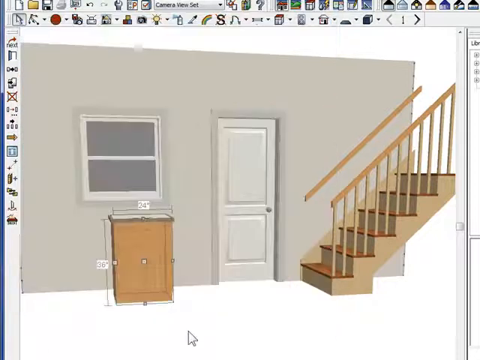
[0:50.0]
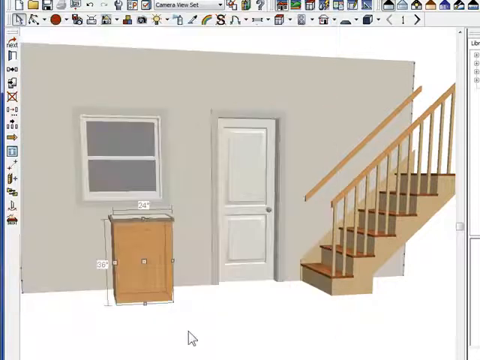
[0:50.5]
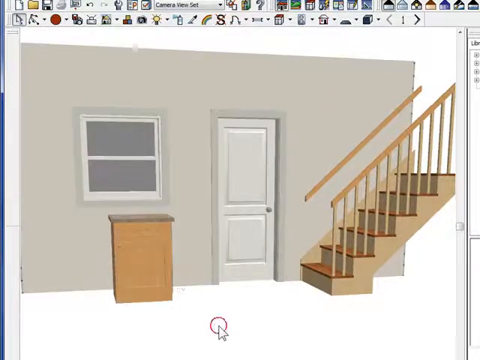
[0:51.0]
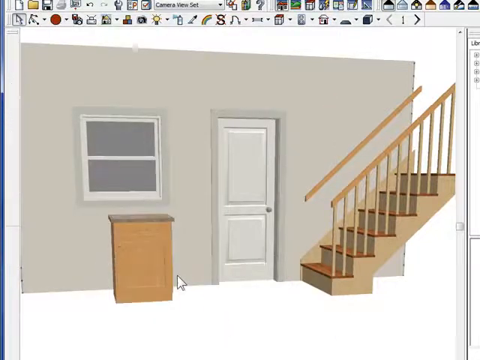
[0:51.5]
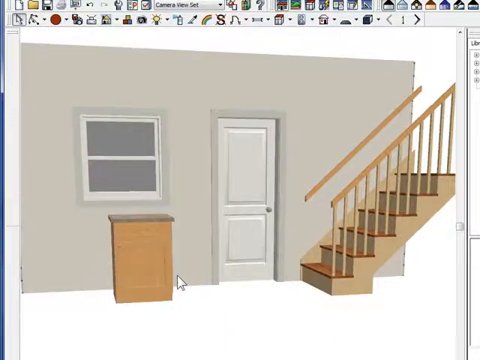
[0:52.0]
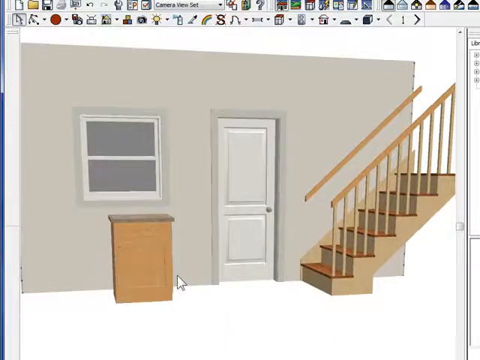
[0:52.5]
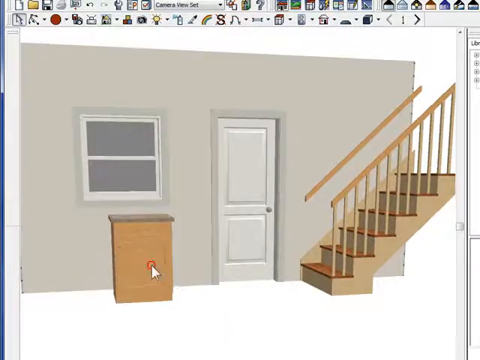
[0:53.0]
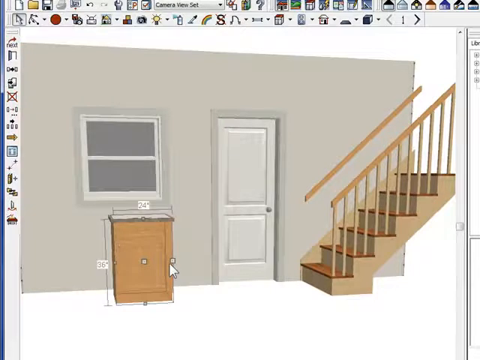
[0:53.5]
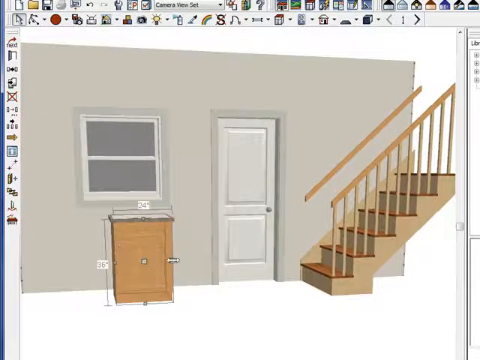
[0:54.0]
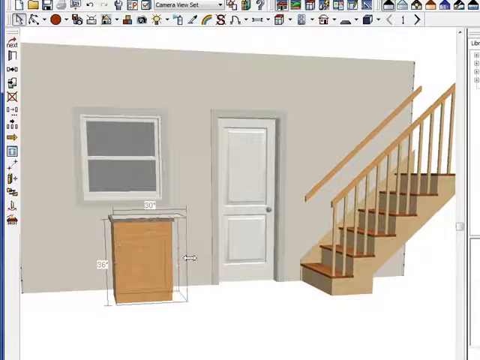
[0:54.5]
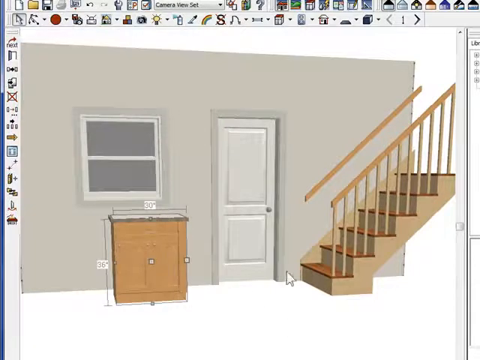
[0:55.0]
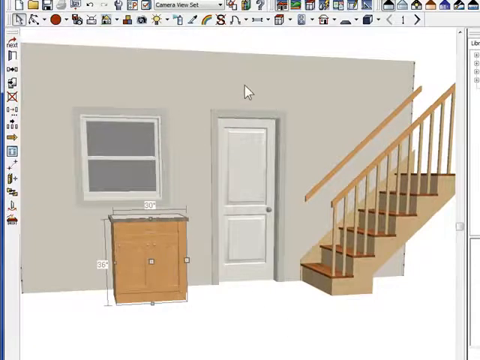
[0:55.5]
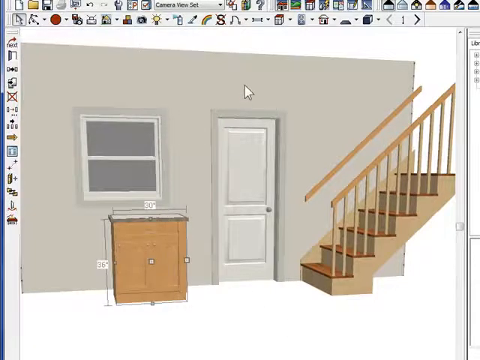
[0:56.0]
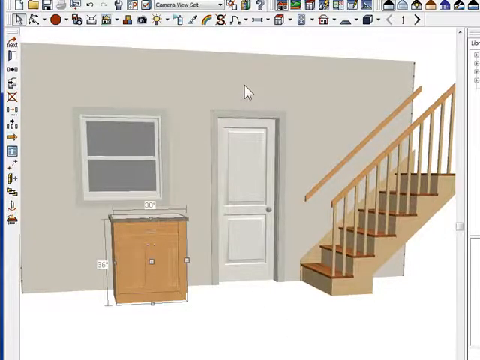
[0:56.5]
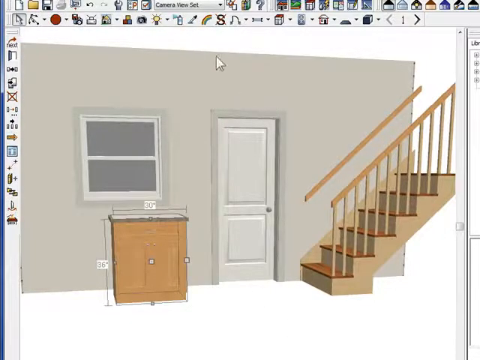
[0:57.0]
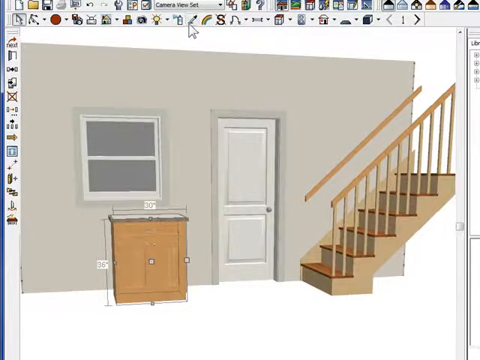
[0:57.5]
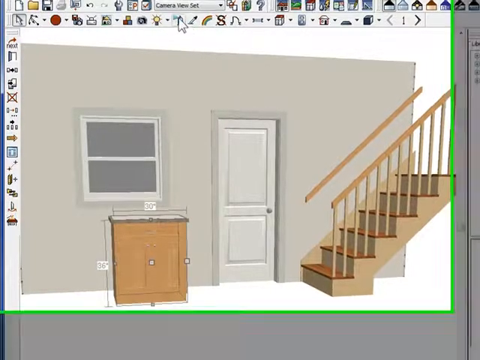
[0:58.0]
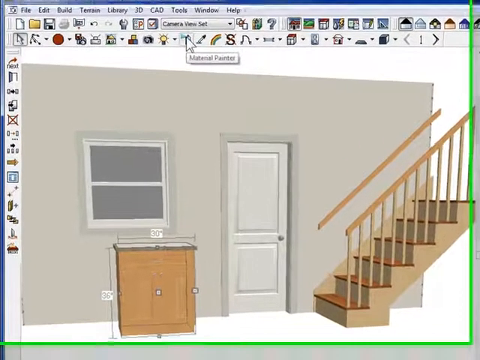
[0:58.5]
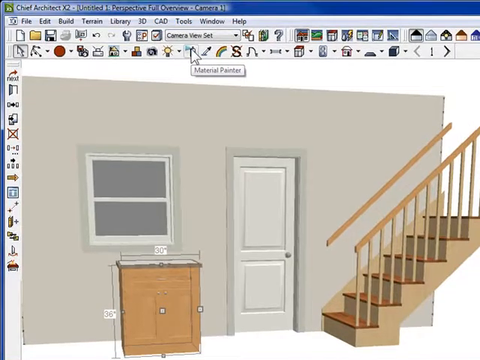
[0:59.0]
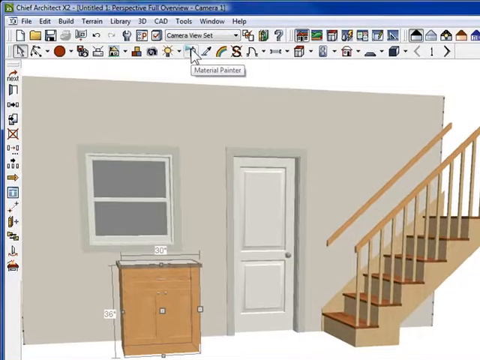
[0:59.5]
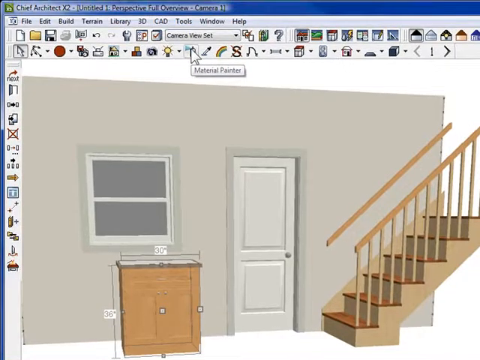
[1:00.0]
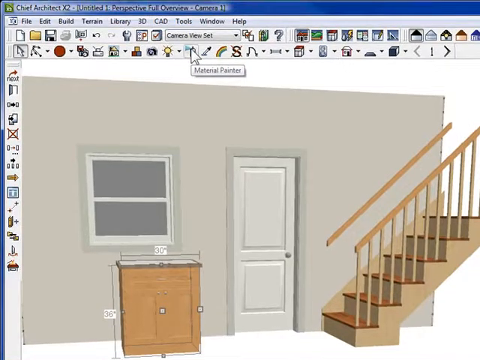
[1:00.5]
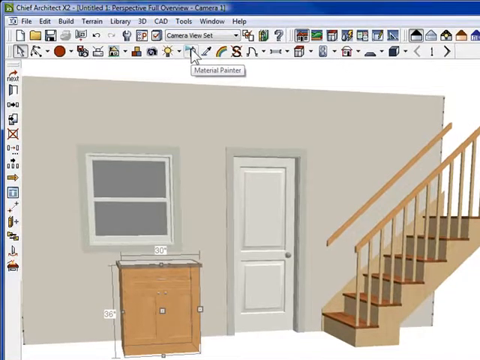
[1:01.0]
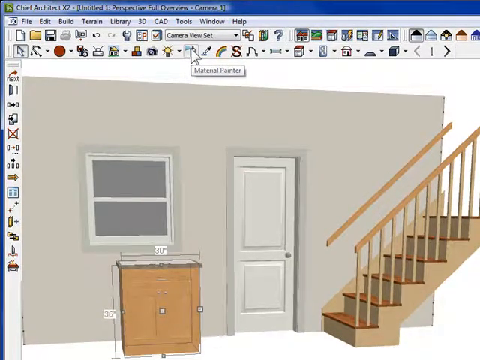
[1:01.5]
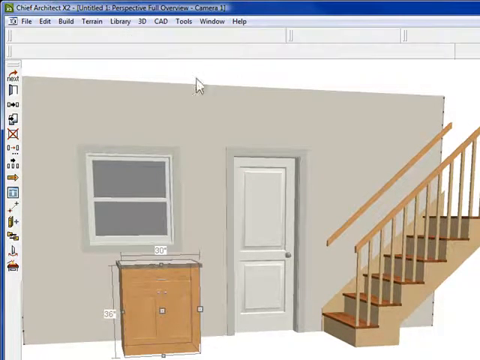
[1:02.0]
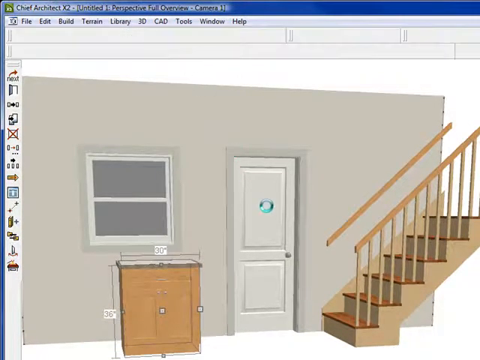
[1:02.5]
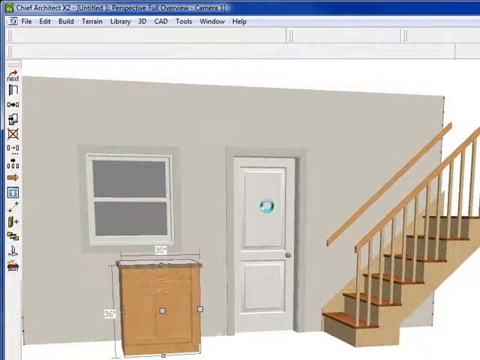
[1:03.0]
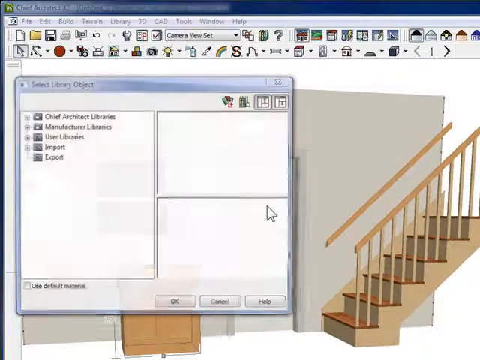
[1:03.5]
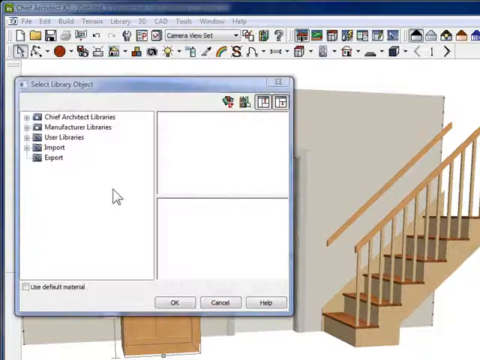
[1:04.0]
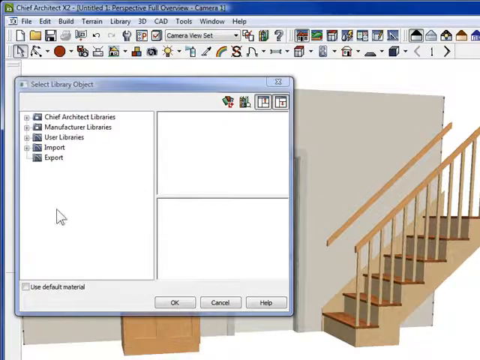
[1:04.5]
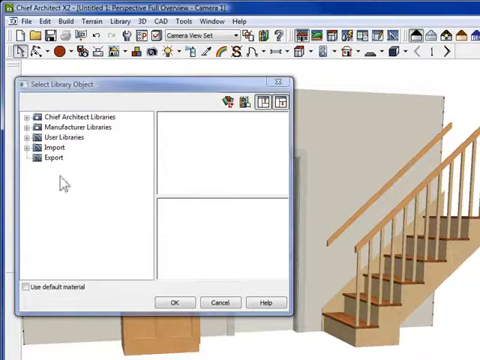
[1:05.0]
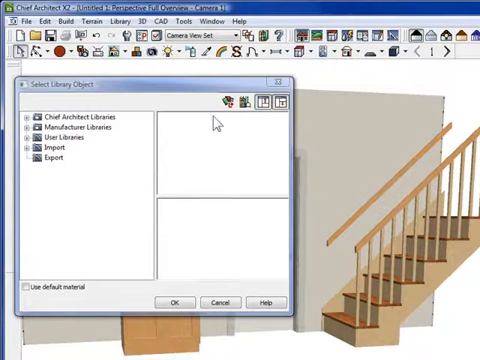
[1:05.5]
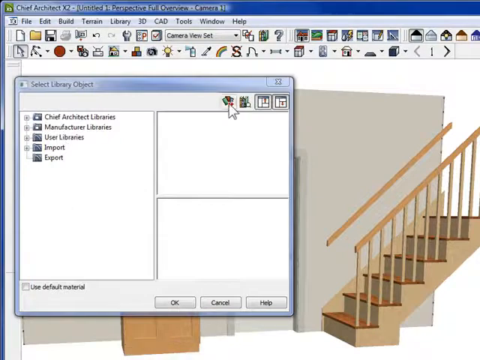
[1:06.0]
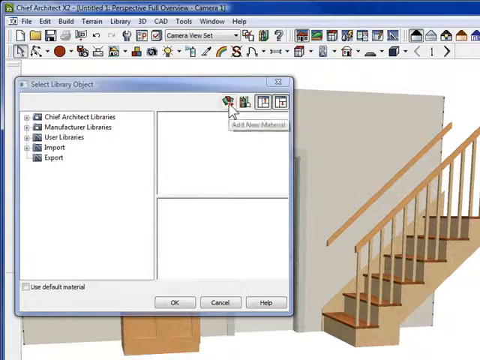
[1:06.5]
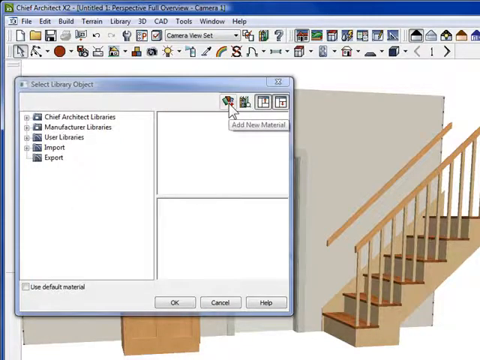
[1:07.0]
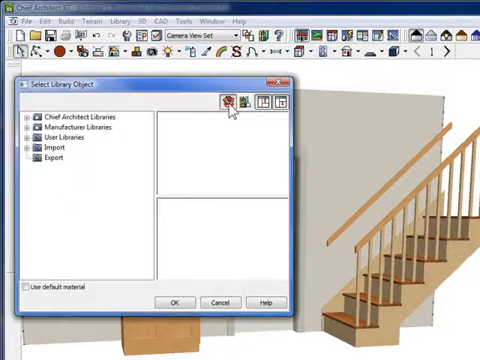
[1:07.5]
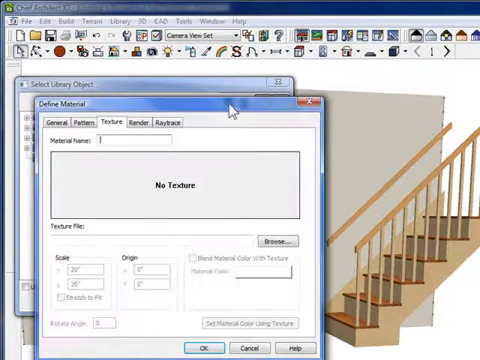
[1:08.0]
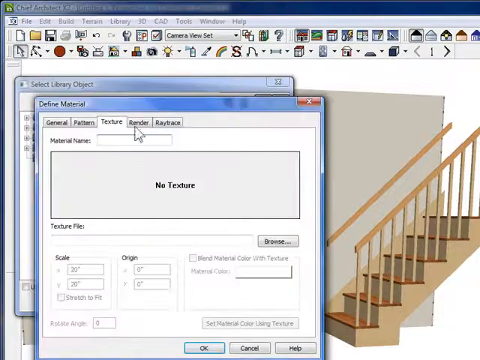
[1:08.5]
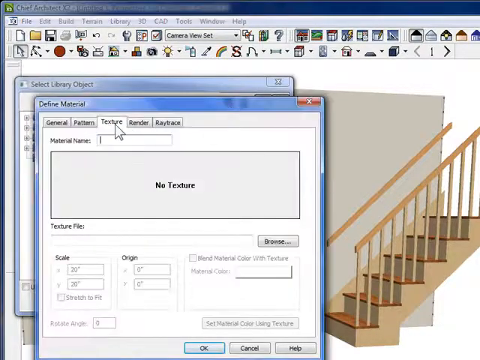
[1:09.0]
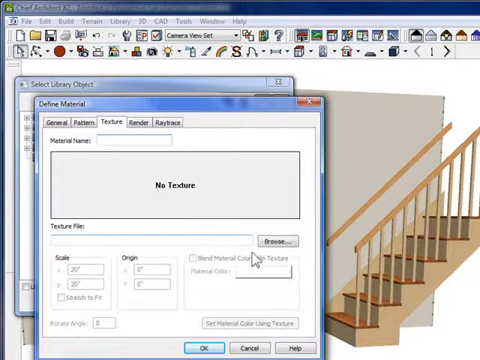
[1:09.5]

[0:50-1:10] Clicking on certain parts of the architectural rendering brings up measurements. The cursor goes up to the icons at the top, which appear to offer different features, and a pop-up menu appears showing various tabs and options. The nightstand or table is clicked, seemingly to make it bigger. A white text box comes up with five or six options on the left. A pop-up about the table gives its measurements, including height. The last text box that comes up appears to be about materials and reads "define material, no texture, pattern, general", with many options.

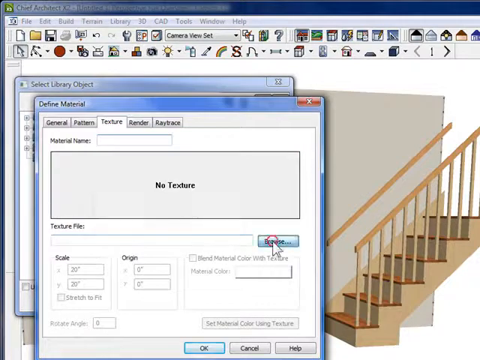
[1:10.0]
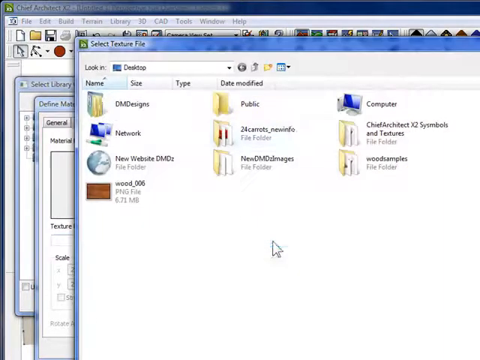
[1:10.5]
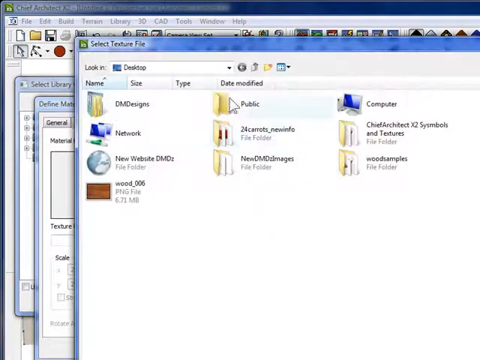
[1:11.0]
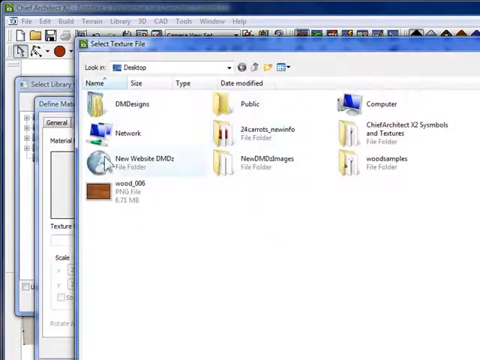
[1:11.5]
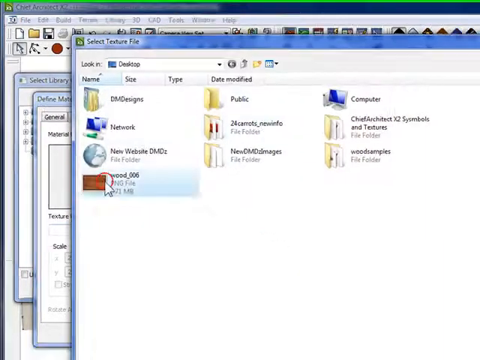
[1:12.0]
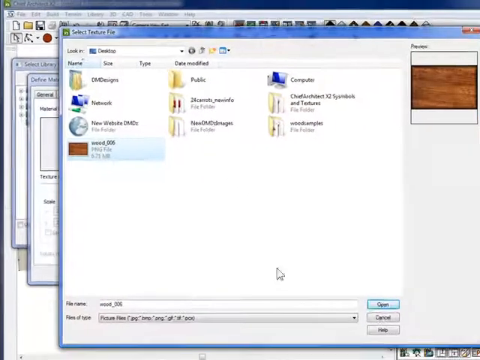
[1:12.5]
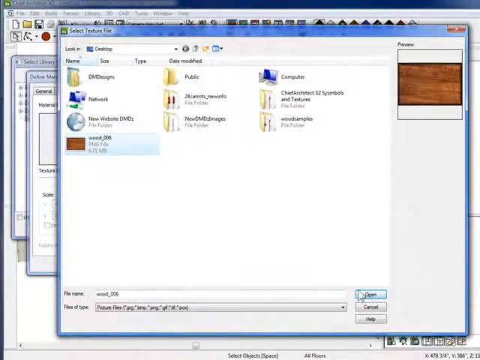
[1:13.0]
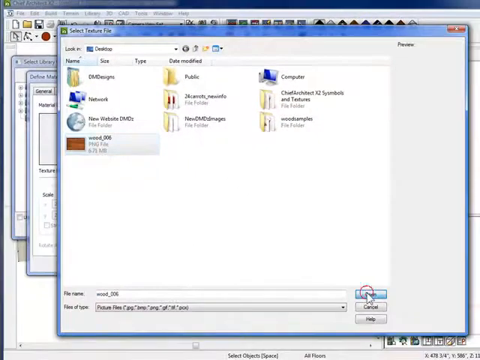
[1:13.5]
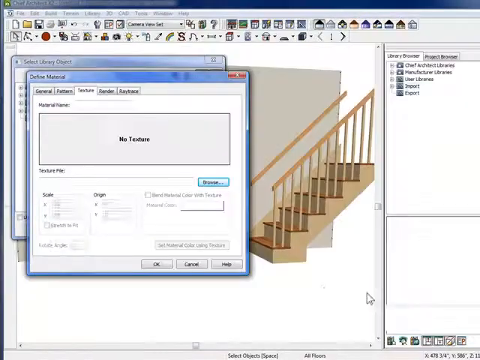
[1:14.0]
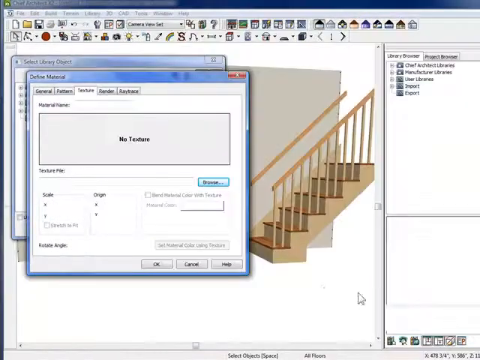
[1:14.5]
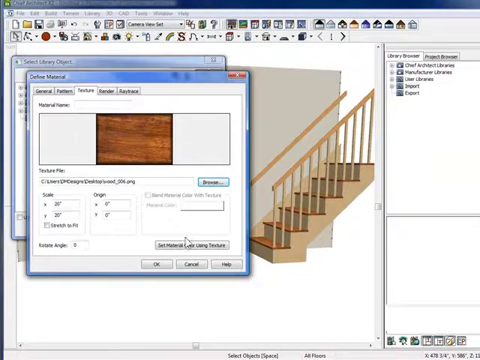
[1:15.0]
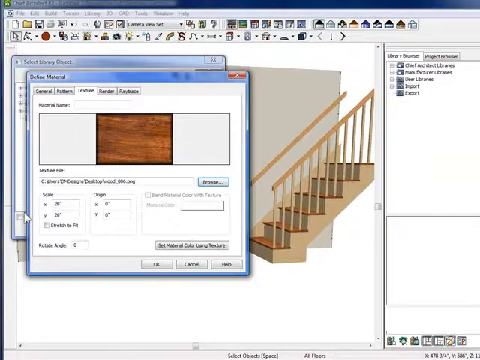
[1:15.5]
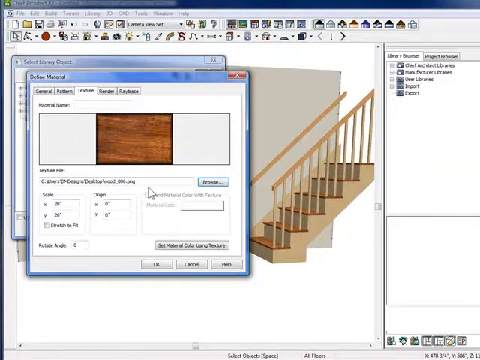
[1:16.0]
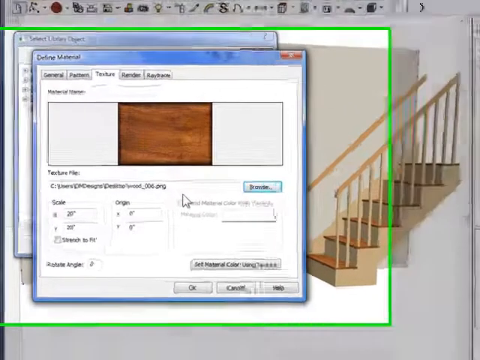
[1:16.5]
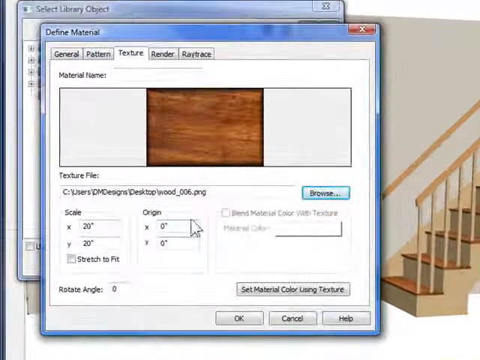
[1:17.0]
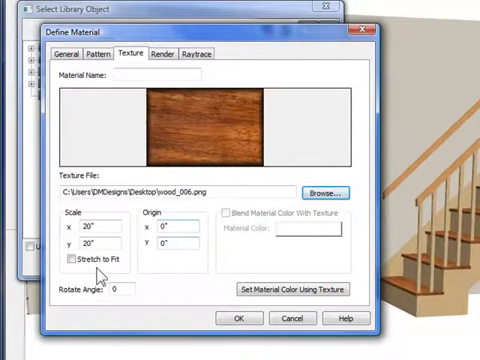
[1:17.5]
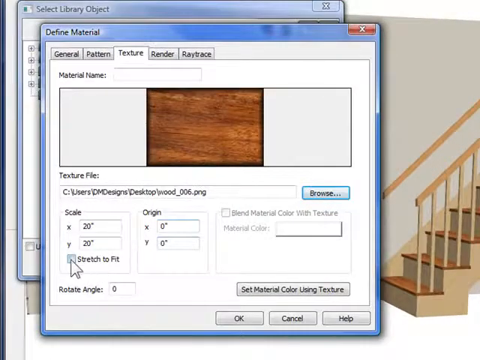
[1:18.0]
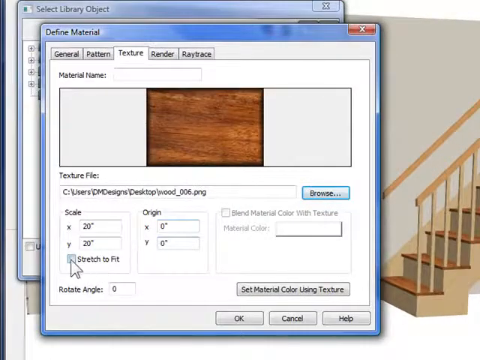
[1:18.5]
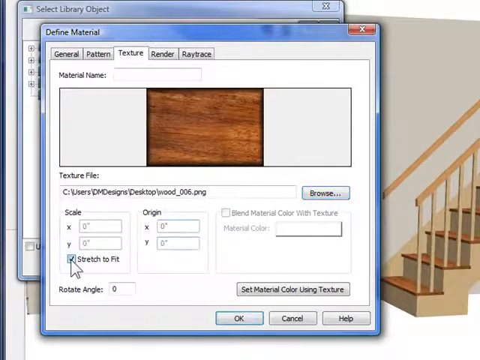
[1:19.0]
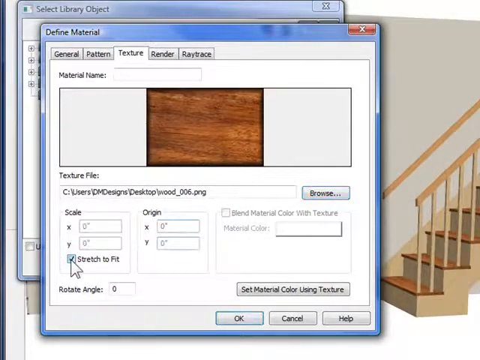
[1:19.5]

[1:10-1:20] Another pop-up appears on top in the window, apparently listing files, with "Select Texture File" at the top and what looks like a preview on the right showing wood grain. Among the files, which seem to number 9 or 10, wood appears to be highlighted. Another window then pops up on top of that, again showing "defined material", with the wood in the middle: a square of golden wood with measurements underneath. The cursor moves around and clicks "Stretch to Fit", apparently to apply these settings to the table, which looks more like a small cabinet or nightstand.